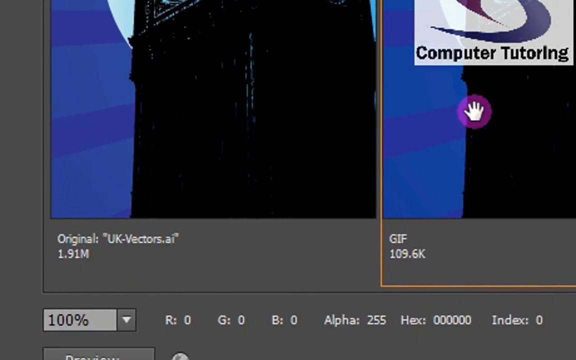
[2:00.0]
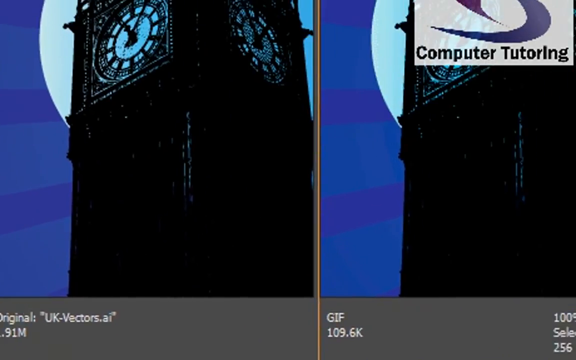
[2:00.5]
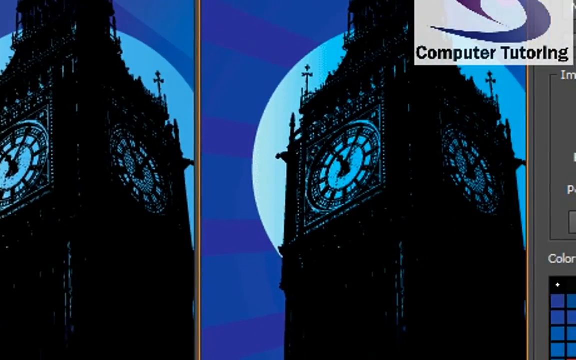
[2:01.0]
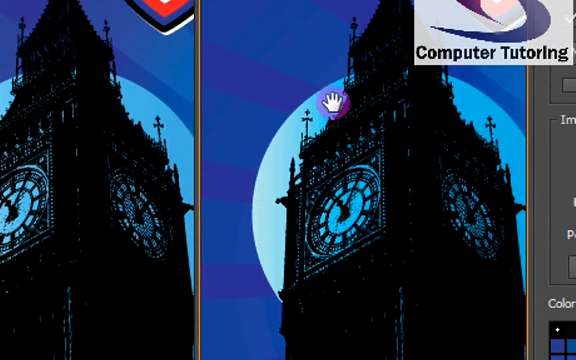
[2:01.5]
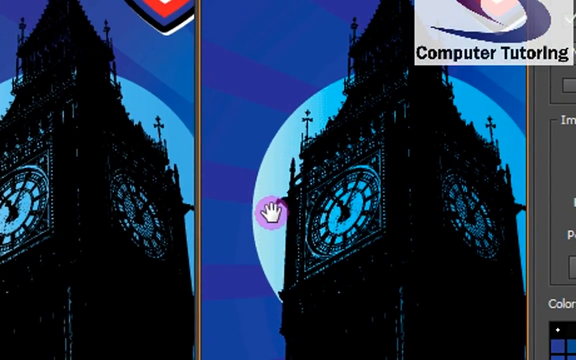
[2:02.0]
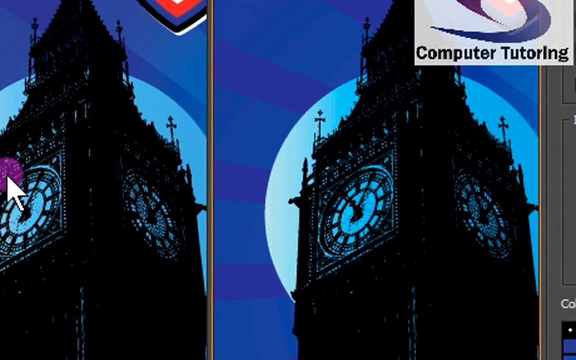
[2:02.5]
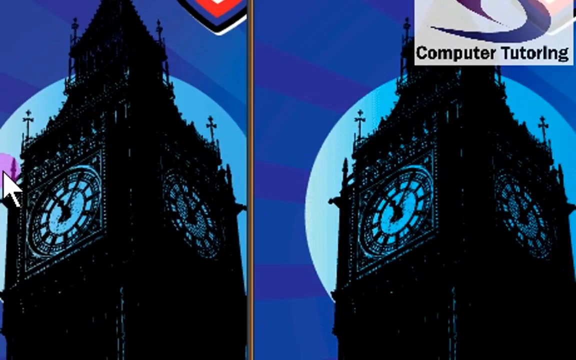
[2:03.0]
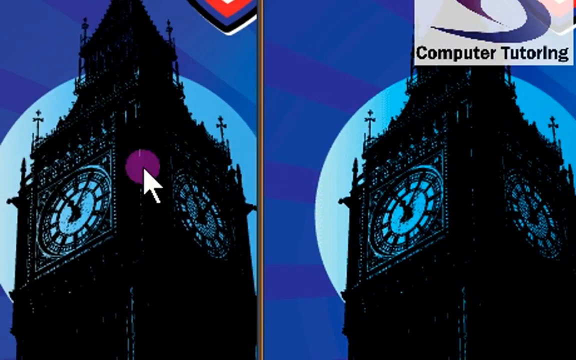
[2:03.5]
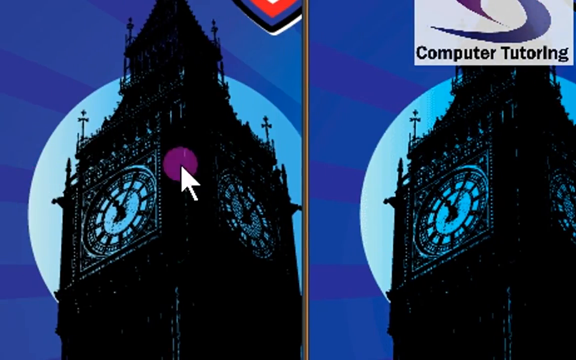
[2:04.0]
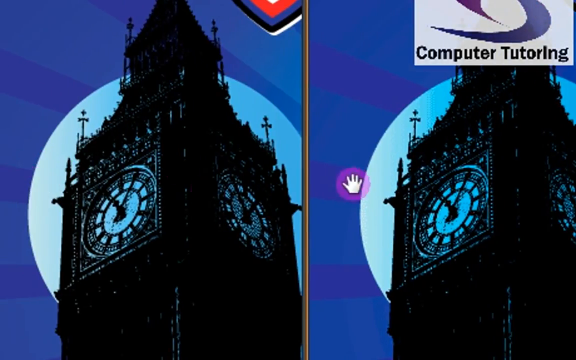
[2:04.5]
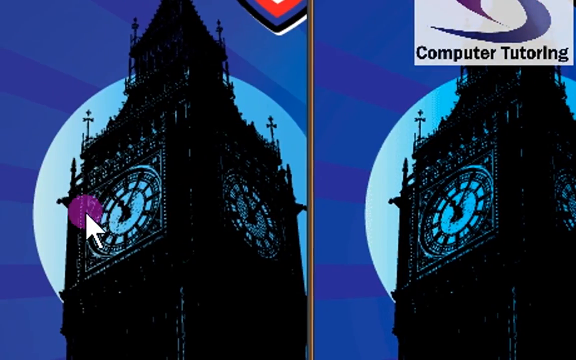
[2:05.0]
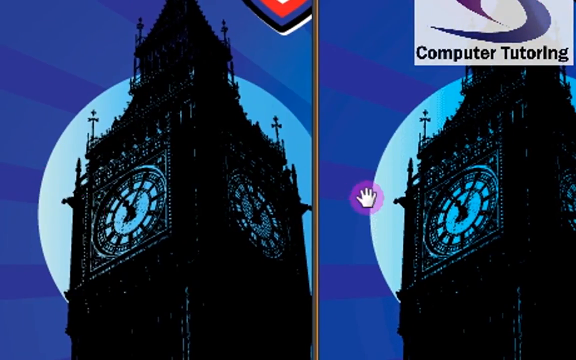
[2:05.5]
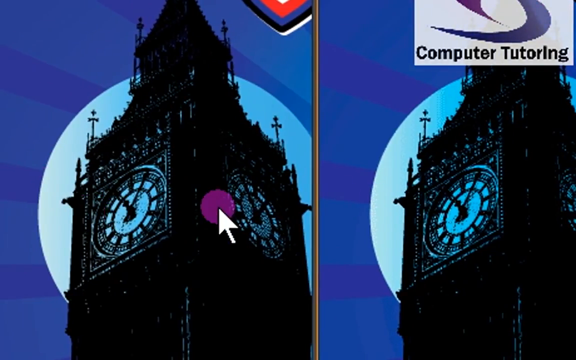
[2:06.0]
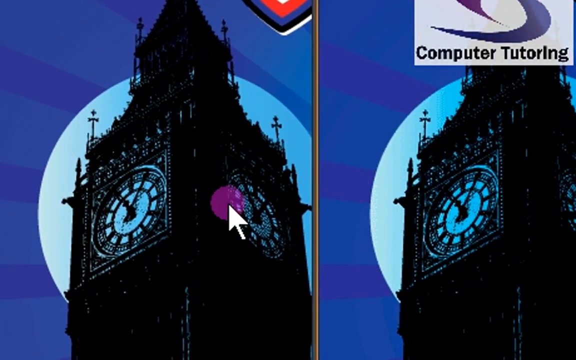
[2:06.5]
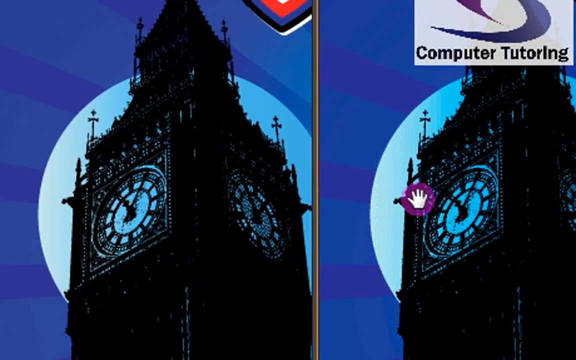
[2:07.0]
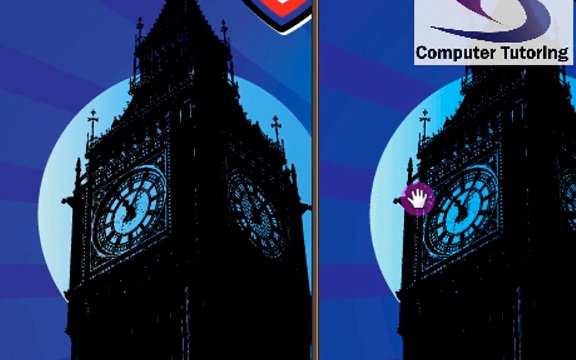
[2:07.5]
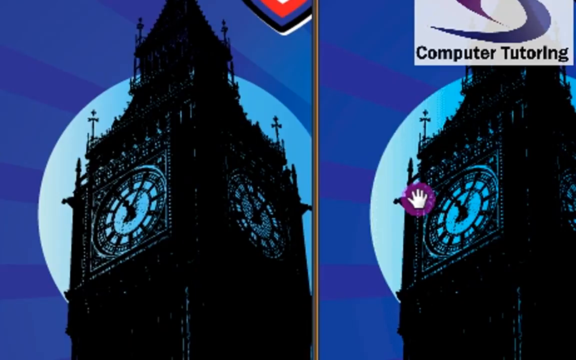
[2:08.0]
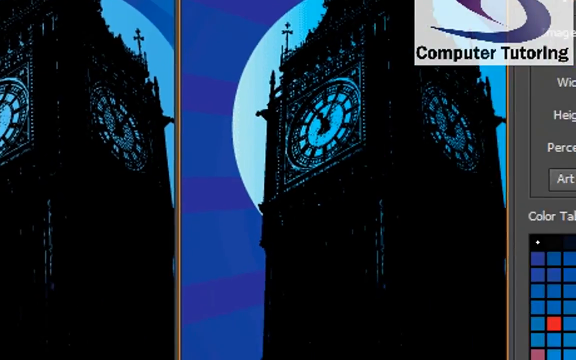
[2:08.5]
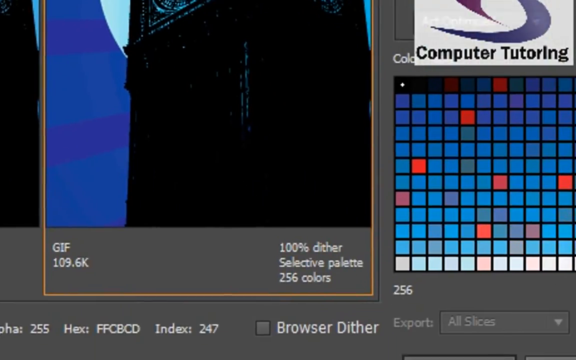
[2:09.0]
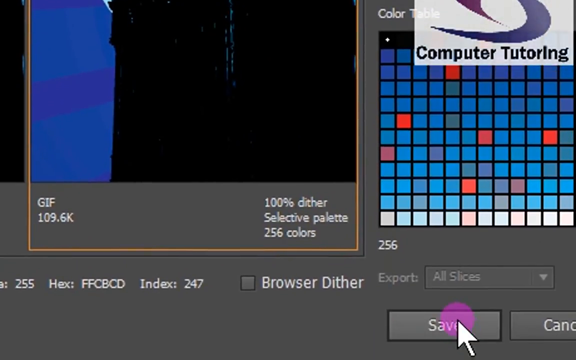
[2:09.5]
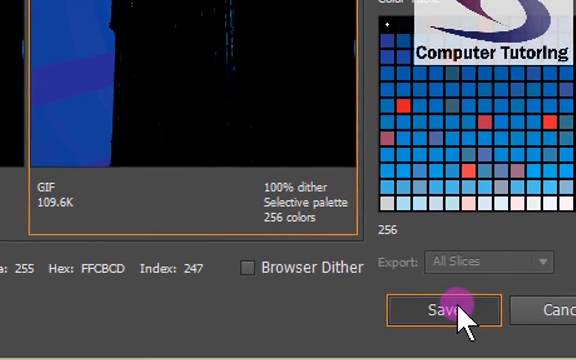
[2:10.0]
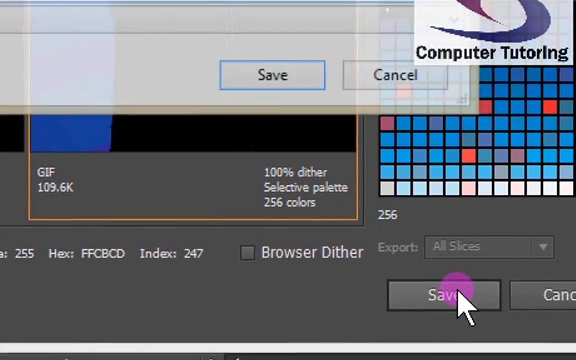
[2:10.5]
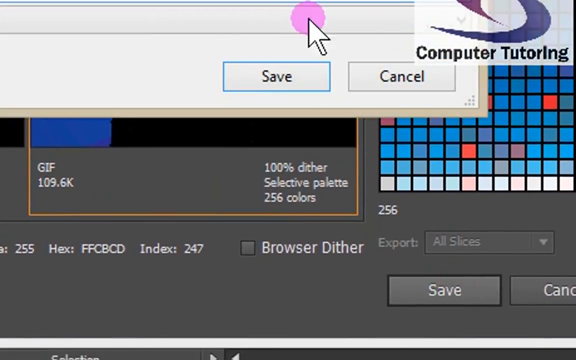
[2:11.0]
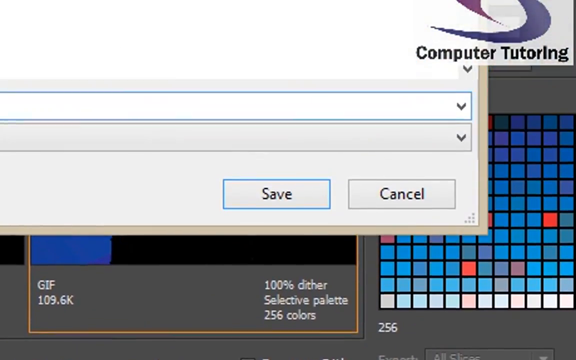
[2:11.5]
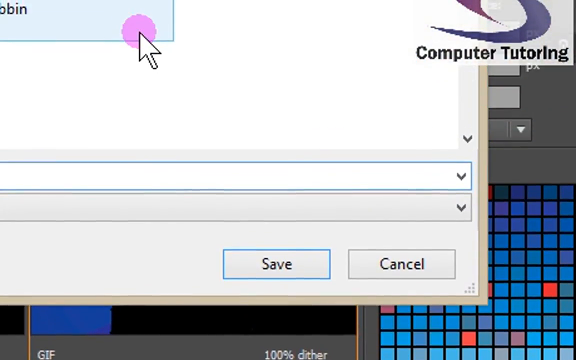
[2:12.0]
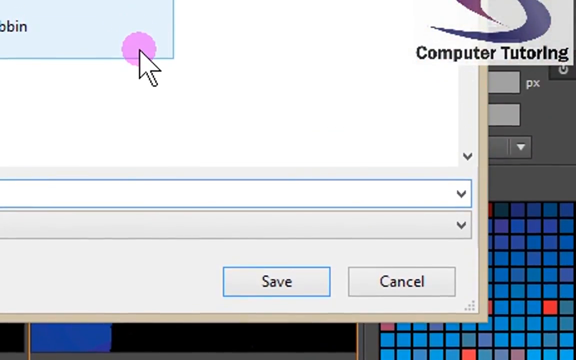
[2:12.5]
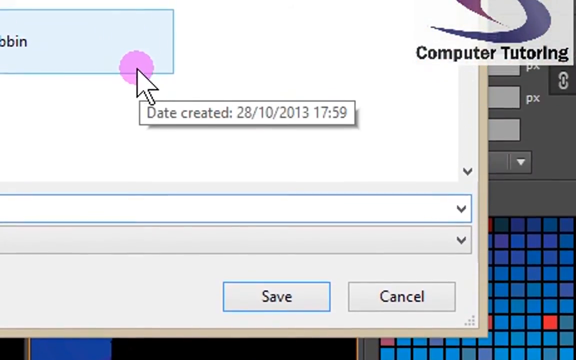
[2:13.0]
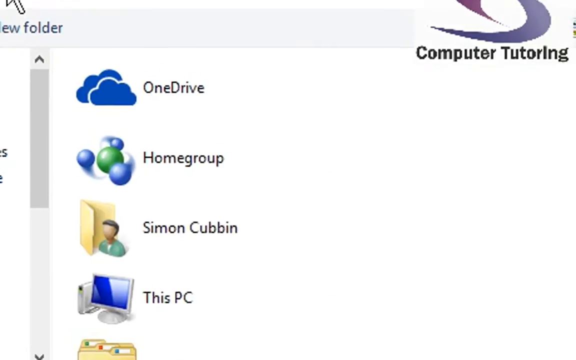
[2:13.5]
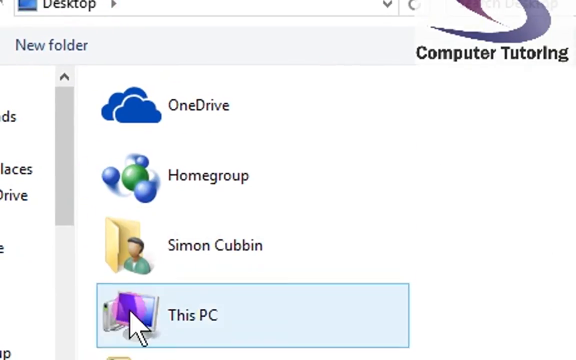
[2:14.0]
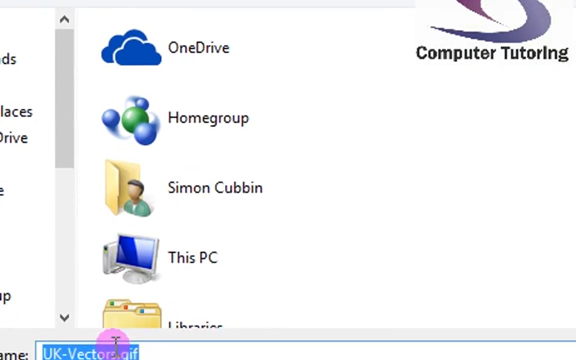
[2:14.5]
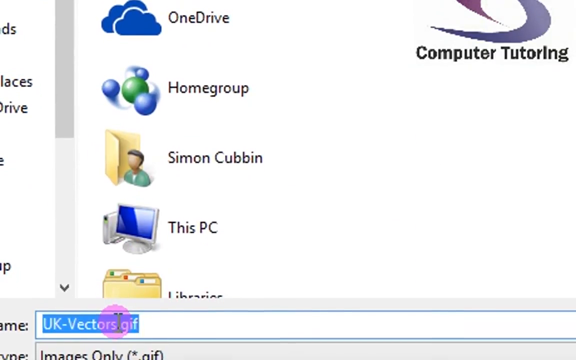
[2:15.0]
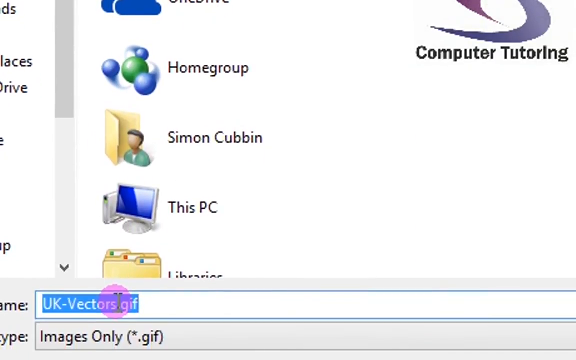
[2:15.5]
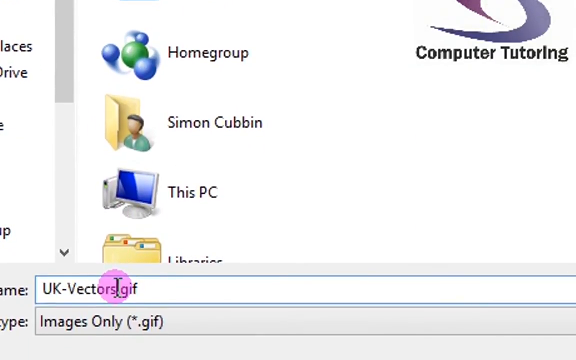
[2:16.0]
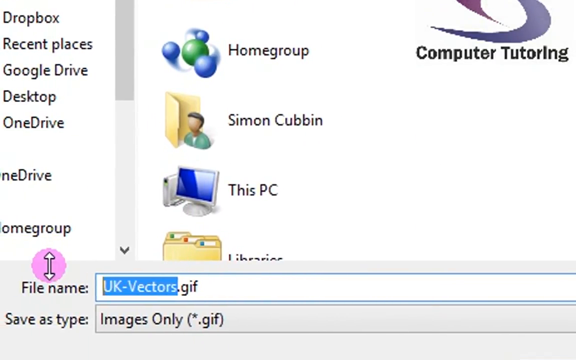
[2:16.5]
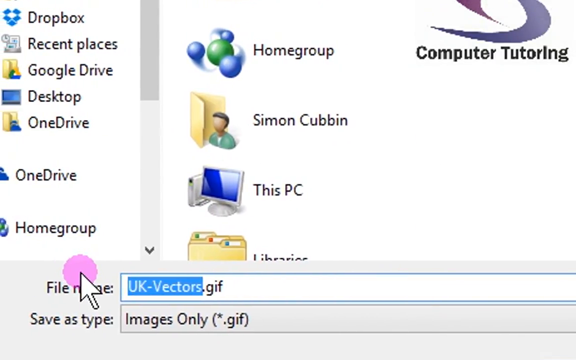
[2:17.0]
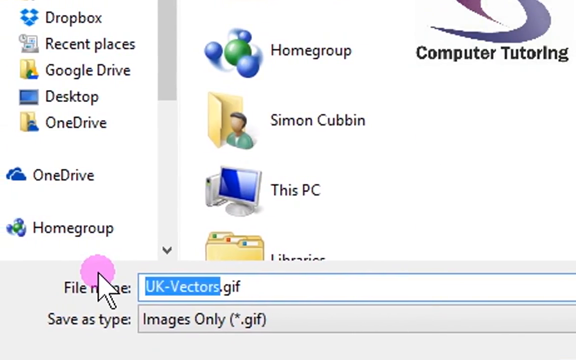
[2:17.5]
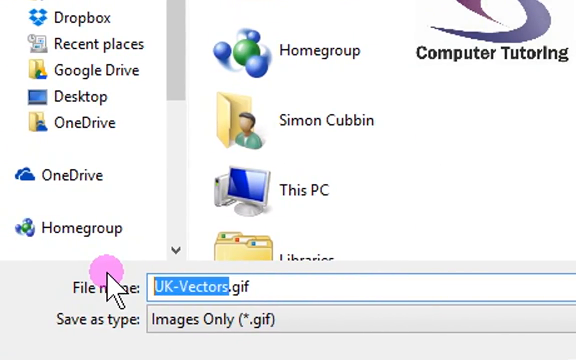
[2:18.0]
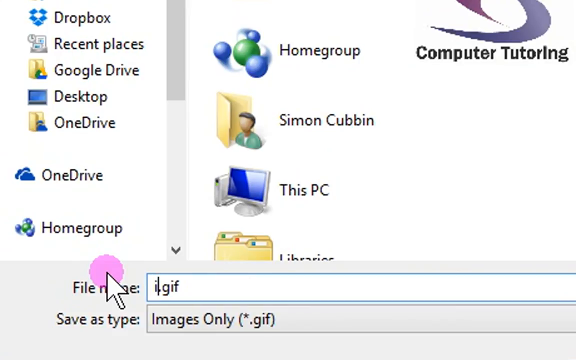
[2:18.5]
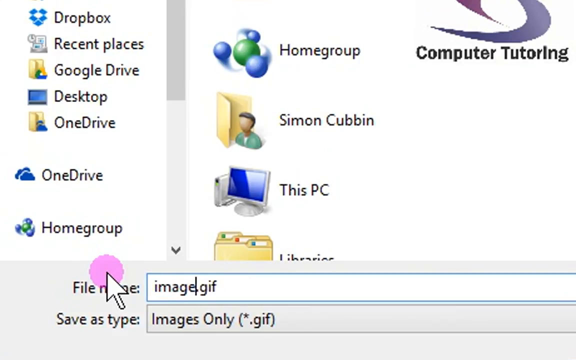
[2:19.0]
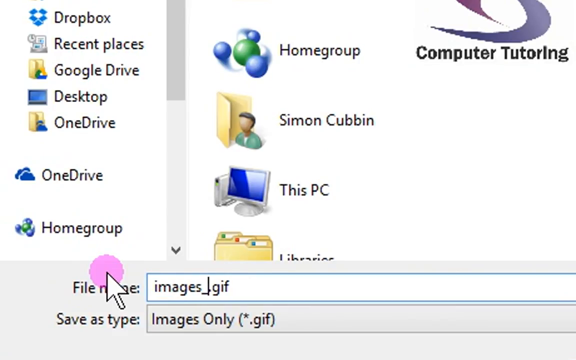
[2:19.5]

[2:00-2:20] Someone demonstrates how to manipulate images; the "Computer Tutoring" logo is in the right-hand corner. In a program where documents and downloads are saved, a pull-out item apparently reads "UK-Vectors.ai", possibly the file name. The Big Ben portion of a larger, apparently computer-generated picture has been manipulated using a pull-down menu that changed the color and size. The cursor has a round dot, and a grab hand appears when it goes over the image. Two images then appear side by side, or one superimposed on the other, and the hand moves back and forth between them. The cursor goes to the bottom and clicks Save, and a window pops up asking where to save. The save location is not visible; the file name is "UK-Vectors.gif", with "Images Only" shown, and the name is changed to "image_of.gif". The view returns to Big Ben.